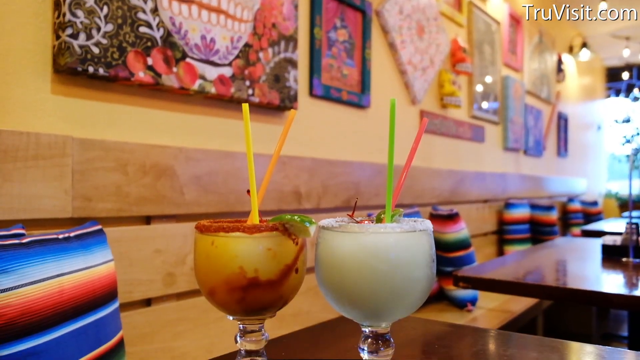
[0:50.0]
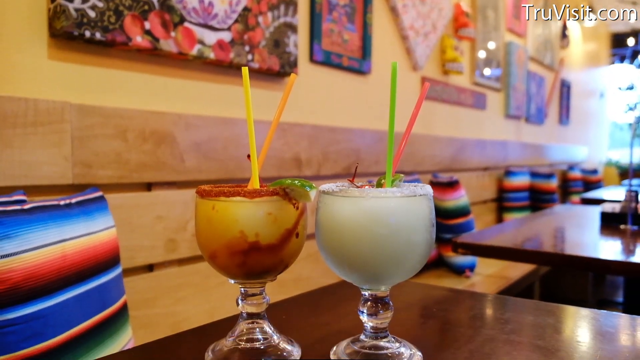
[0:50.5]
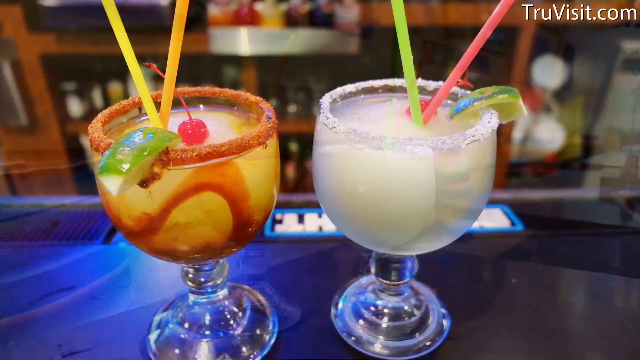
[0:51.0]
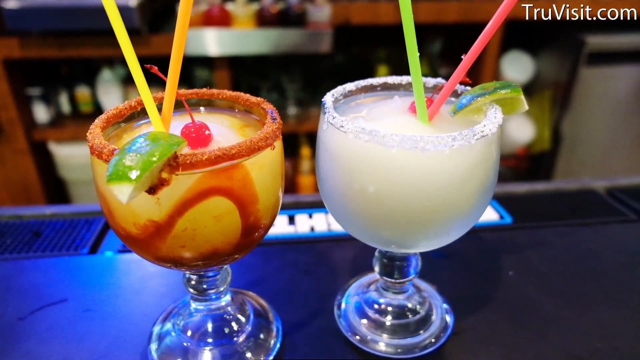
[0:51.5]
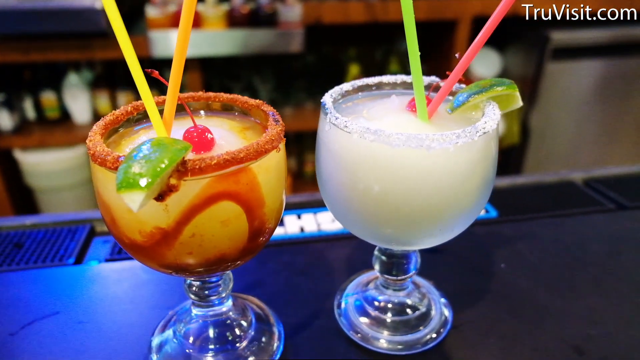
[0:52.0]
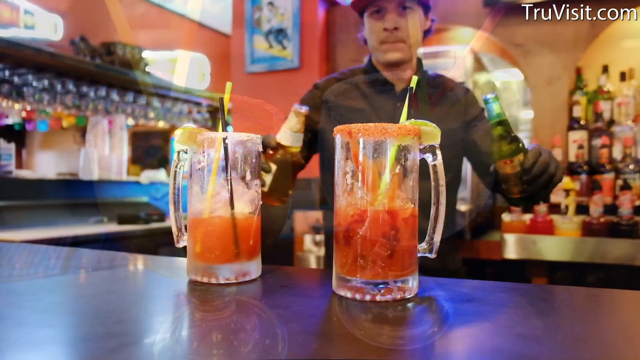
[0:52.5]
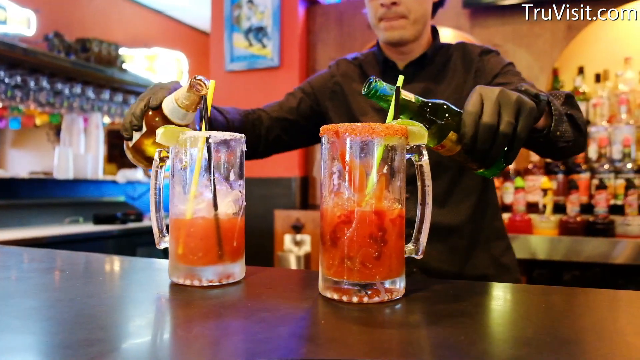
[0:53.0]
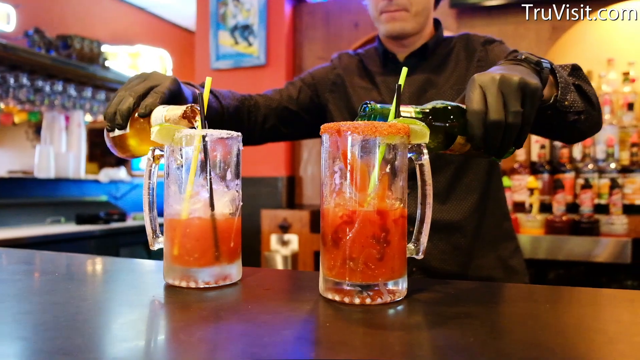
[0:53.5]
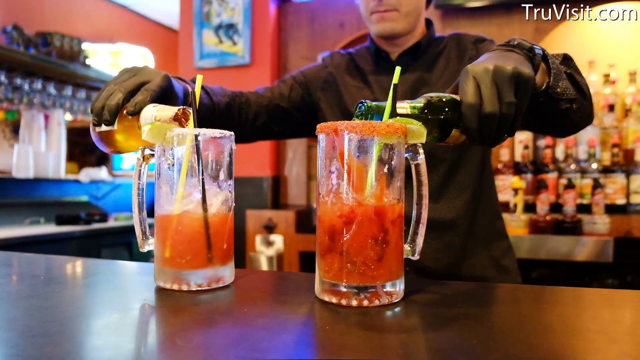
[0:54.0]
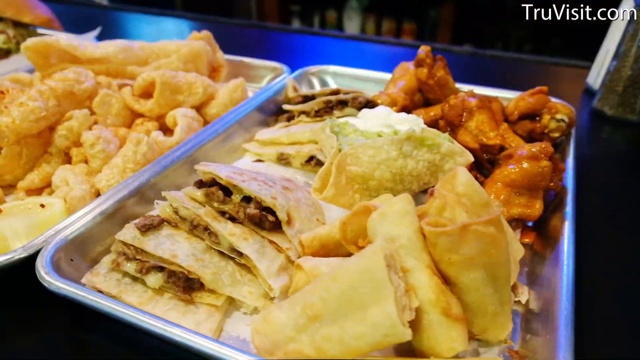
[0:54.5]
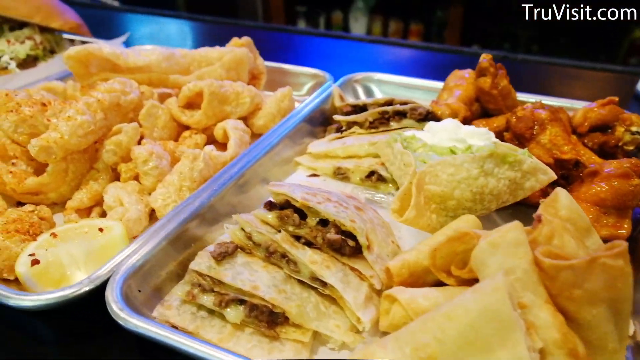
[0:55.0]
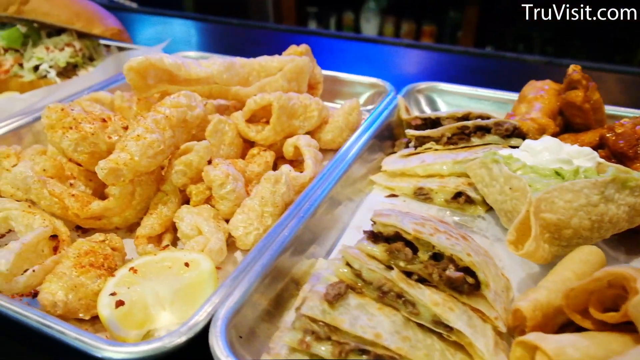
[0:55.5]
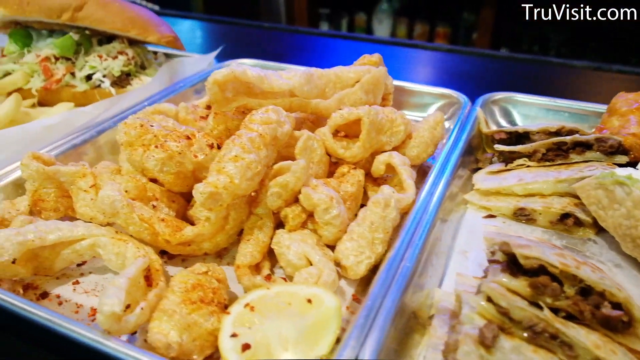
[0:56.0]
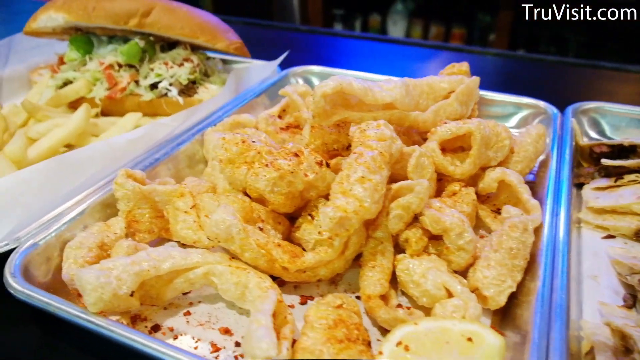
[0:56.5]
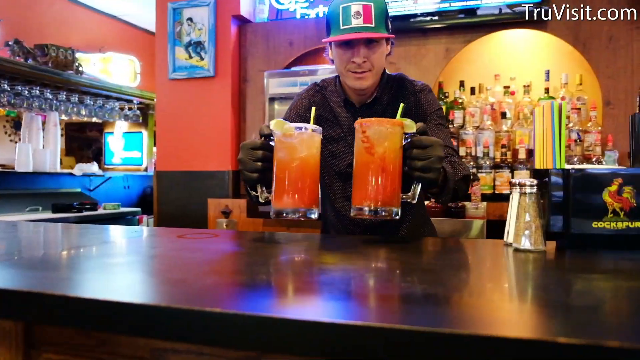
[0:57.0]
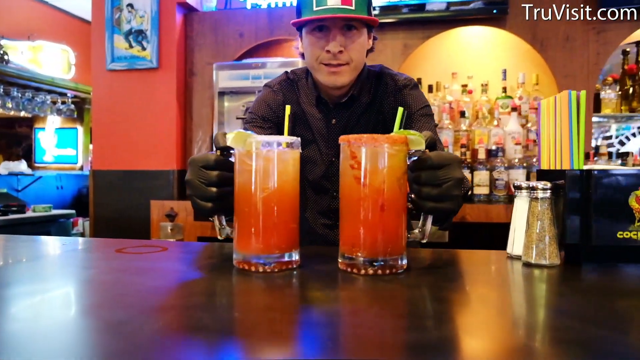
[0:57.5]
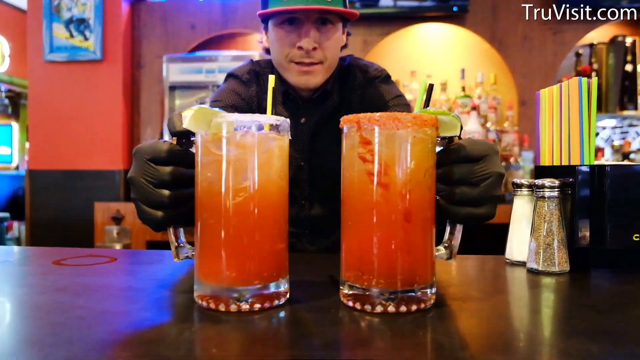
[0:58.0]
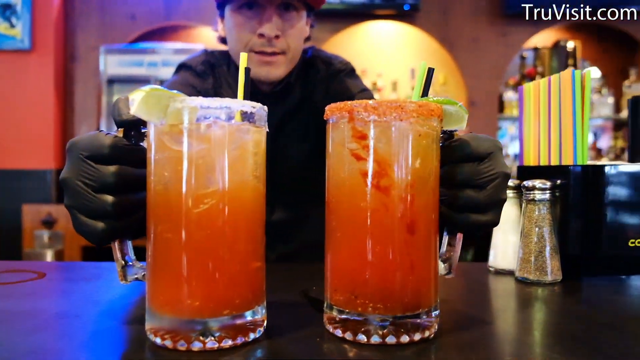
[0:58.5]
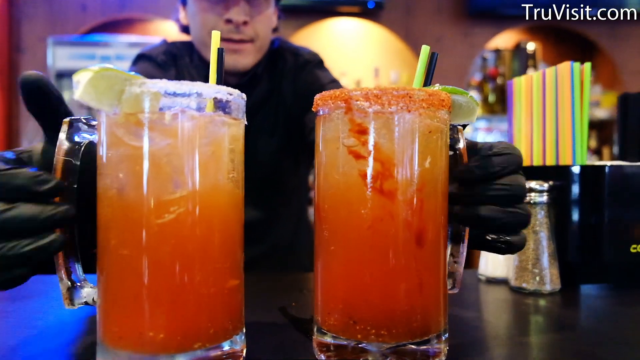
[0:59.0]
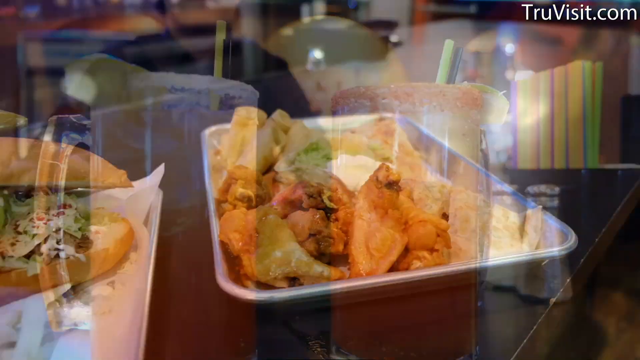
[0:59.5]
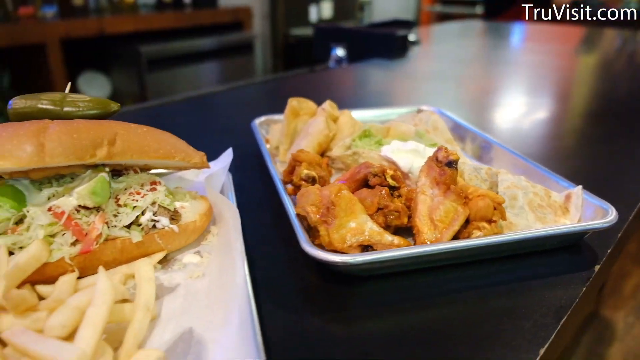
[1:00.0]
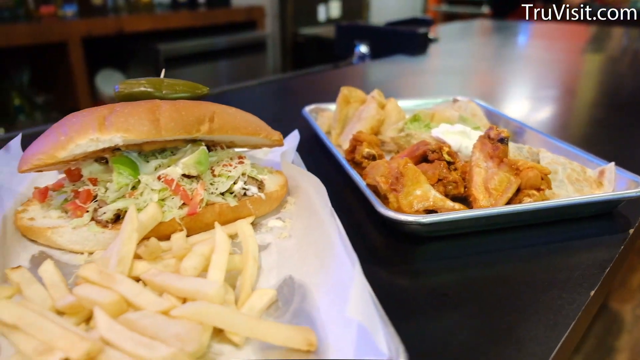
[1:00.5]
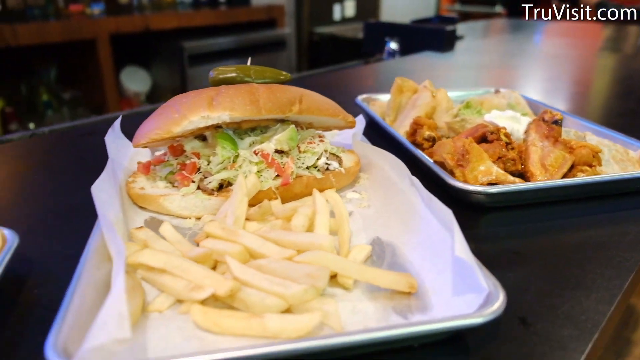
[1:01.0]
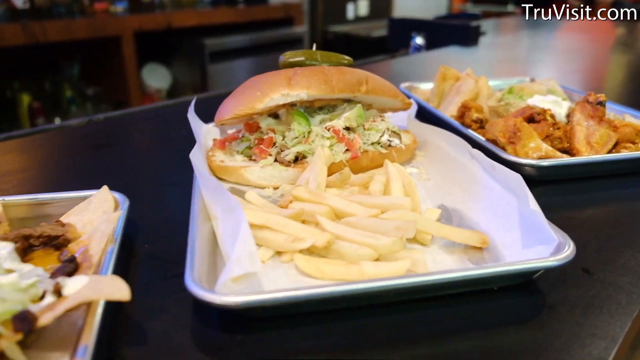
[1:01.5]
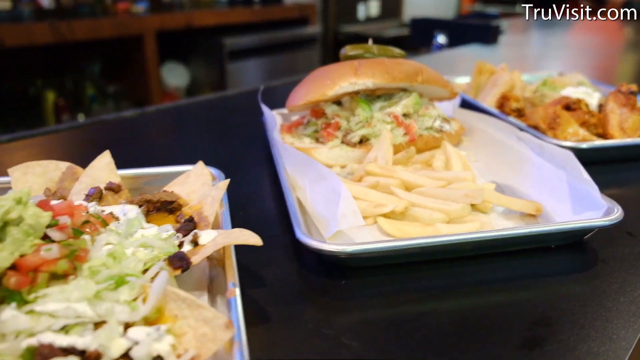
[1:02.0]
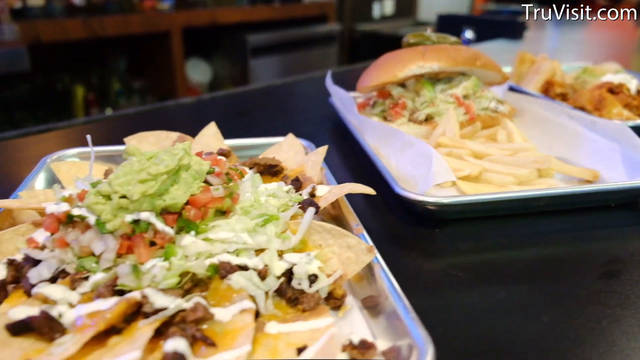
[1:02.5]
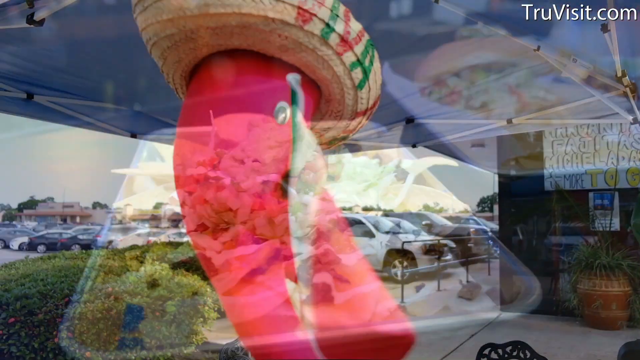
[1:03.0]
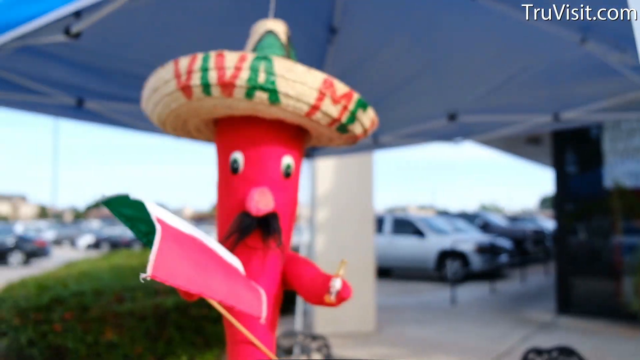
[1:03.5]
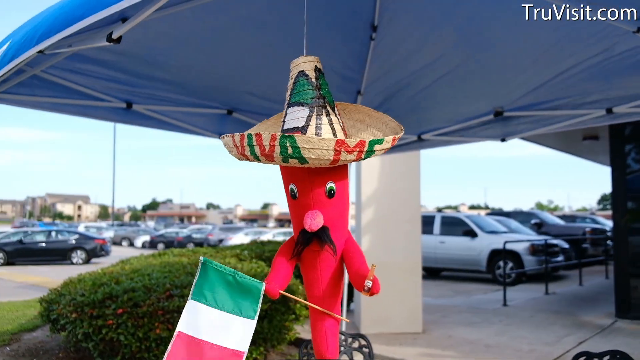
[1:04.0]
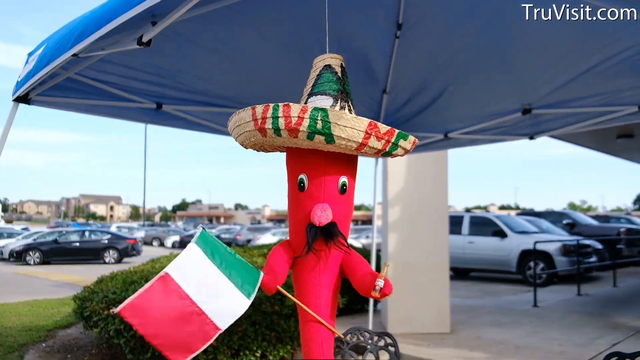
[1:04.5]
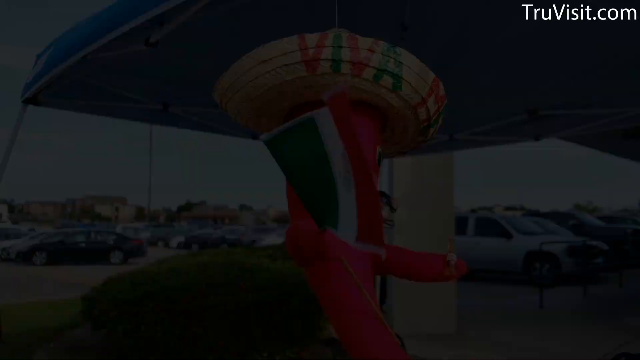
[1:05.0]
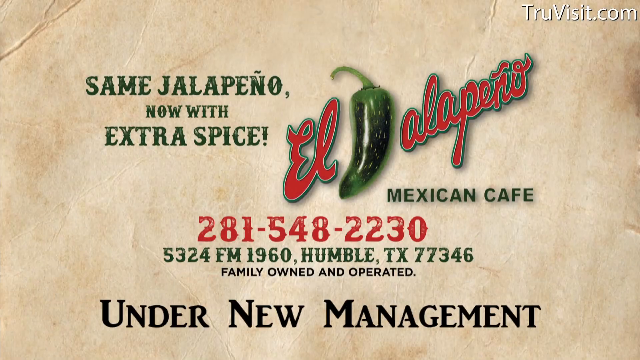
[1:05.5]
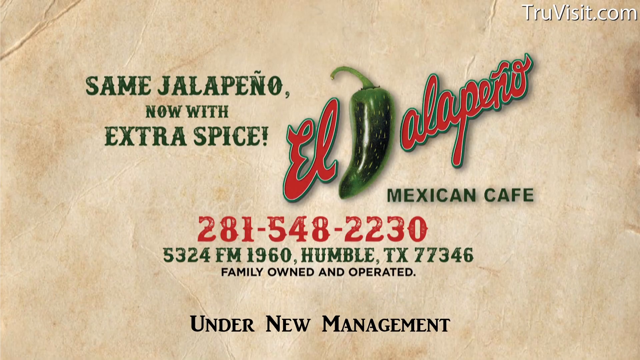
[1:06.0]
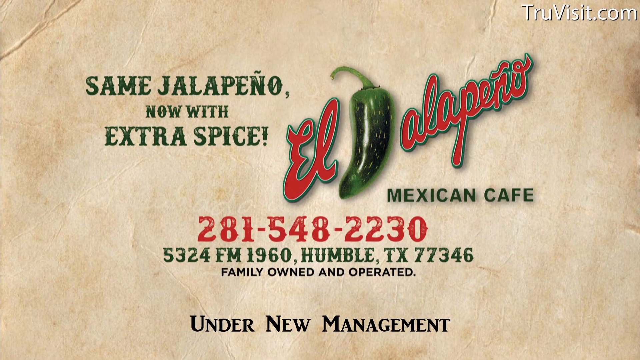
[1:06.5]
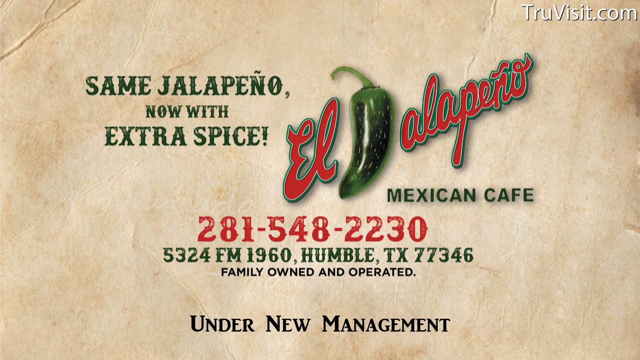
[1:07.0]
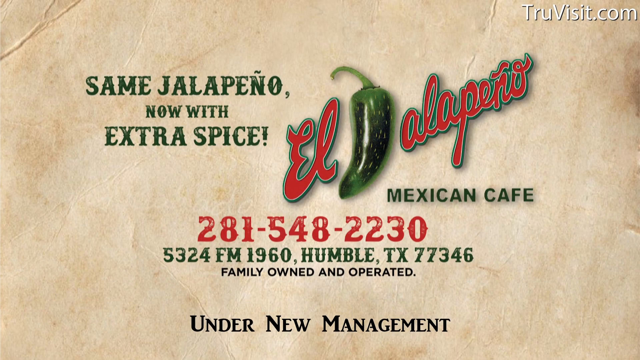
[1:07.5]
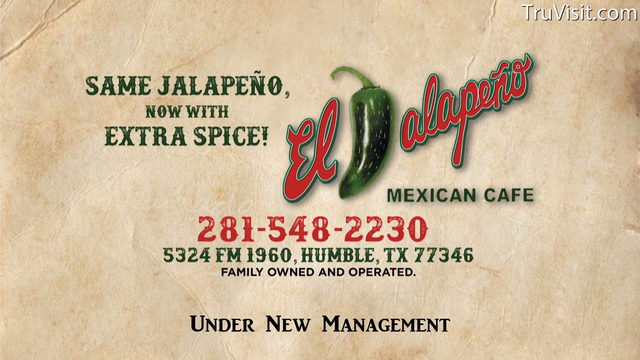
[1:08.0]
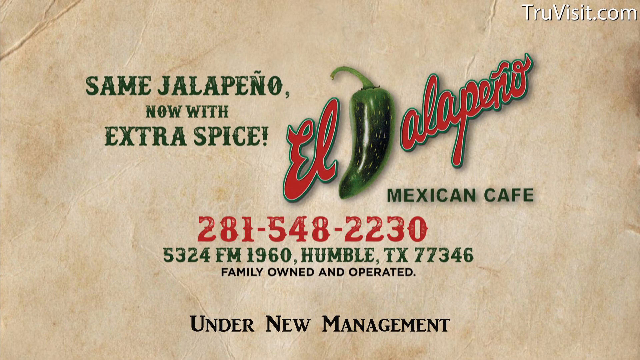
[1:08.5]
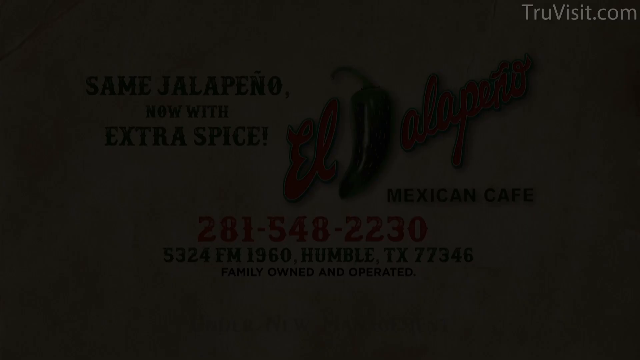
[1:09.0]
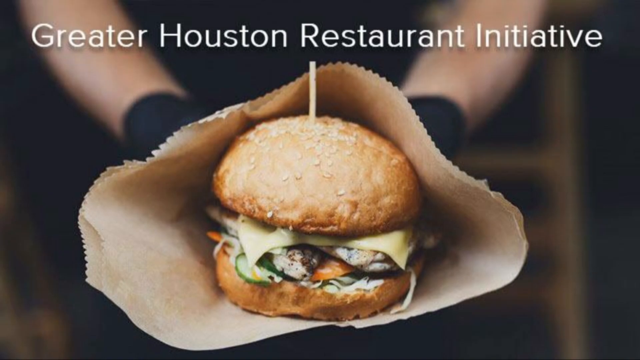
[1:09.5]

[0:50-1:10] On a table are what look to be two drinks, possibly margaritas. One glass has salt on the rim; it is unclear what is on the other rim. A bartender holds two large mugs and pours two bottles into them. Large pans of food follow, along with foods shown earlier: the quesadilla, the wings, the chicharones, the menudo soup and the sandwich. The bartender has completely emptied both bottles of beer into the large mugs. One mug's rim has what looks to be salt around it and the other has what appears to be some type of red seasoning; one has a lemon on it and the other a lime.